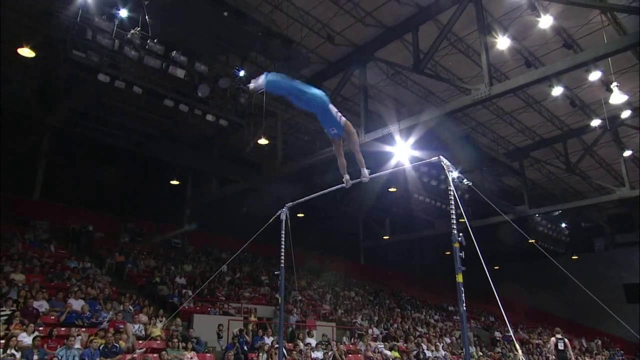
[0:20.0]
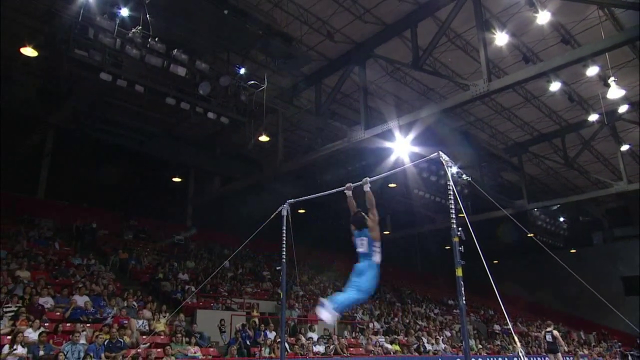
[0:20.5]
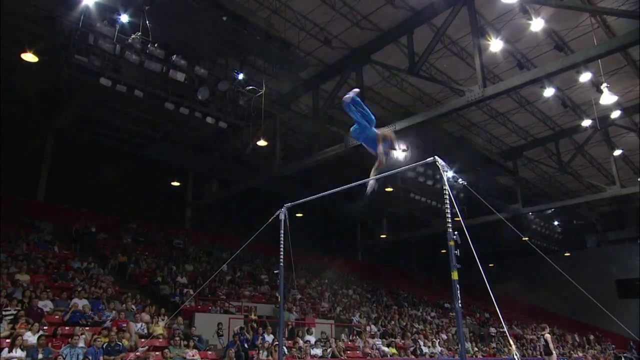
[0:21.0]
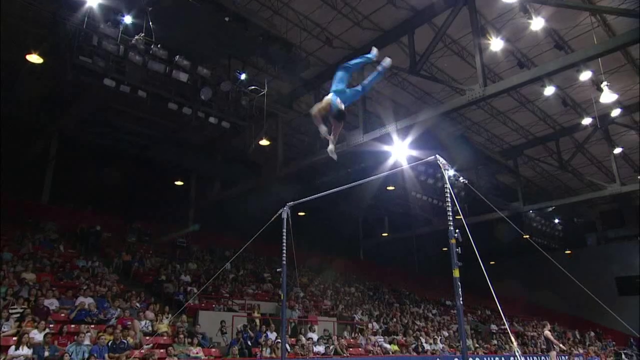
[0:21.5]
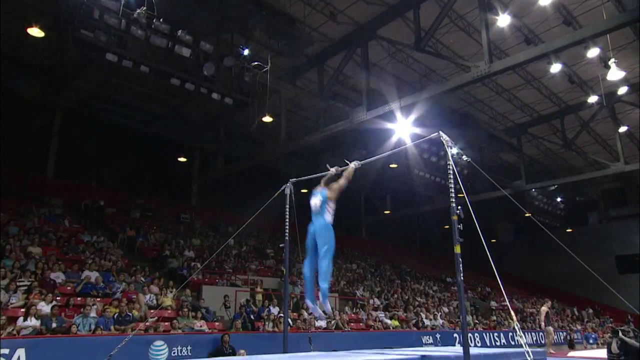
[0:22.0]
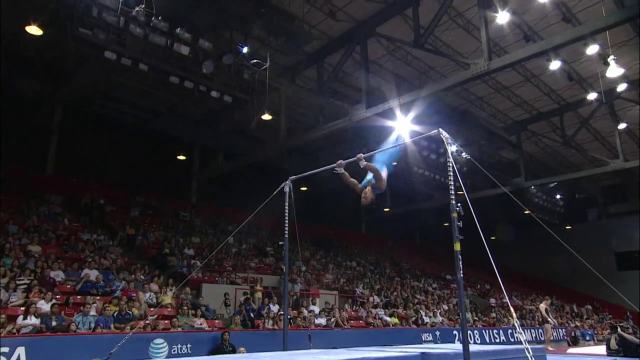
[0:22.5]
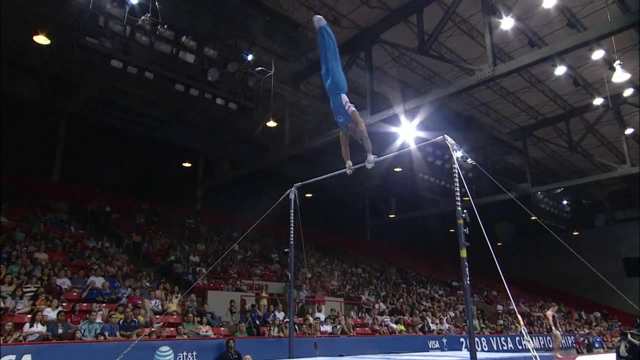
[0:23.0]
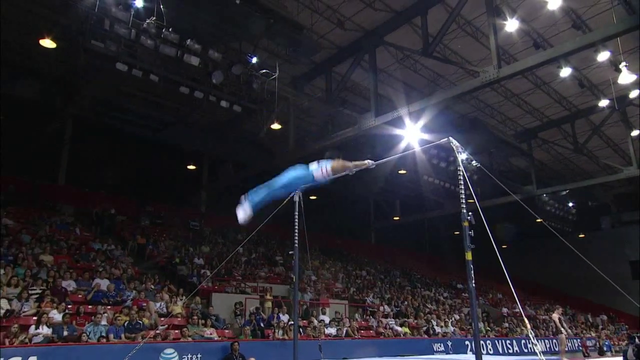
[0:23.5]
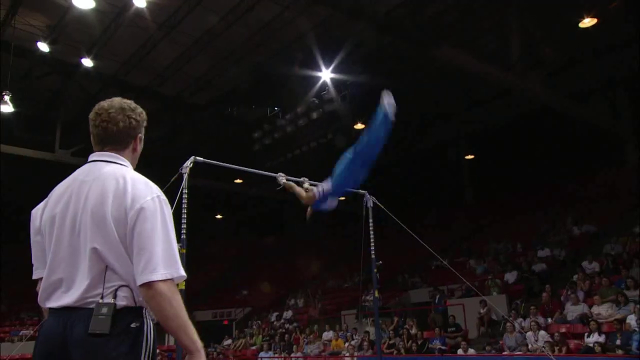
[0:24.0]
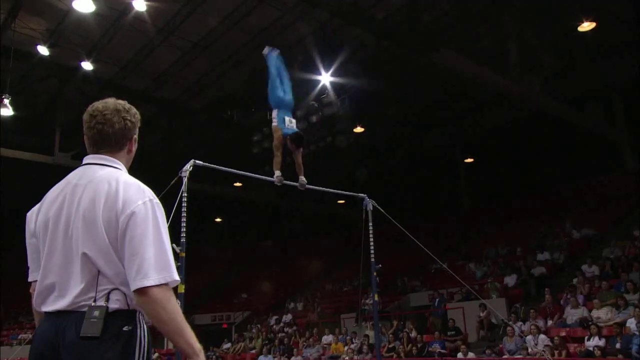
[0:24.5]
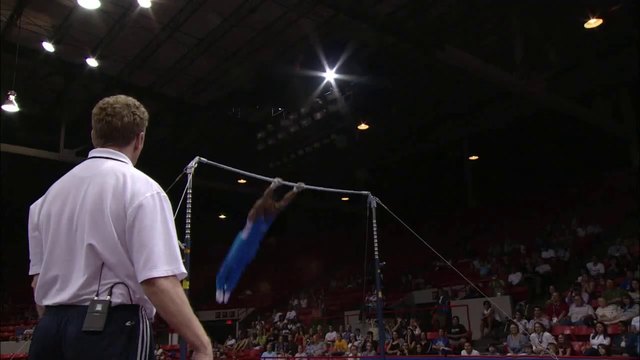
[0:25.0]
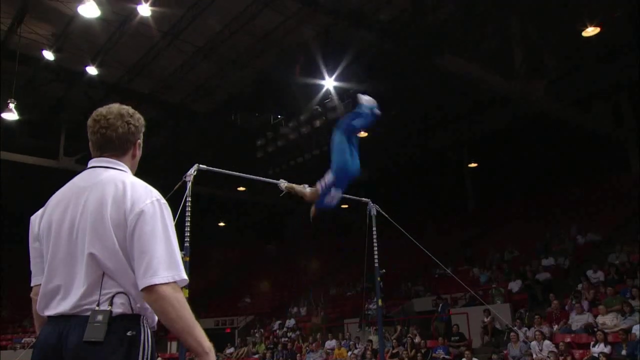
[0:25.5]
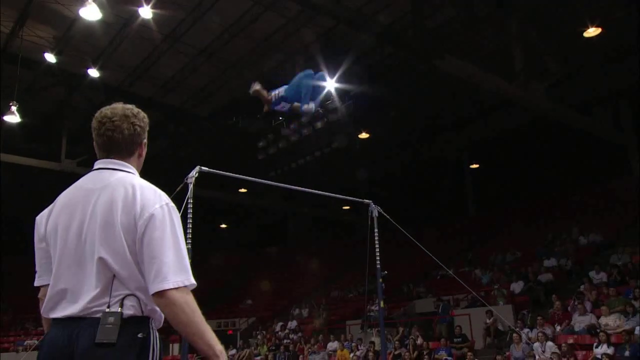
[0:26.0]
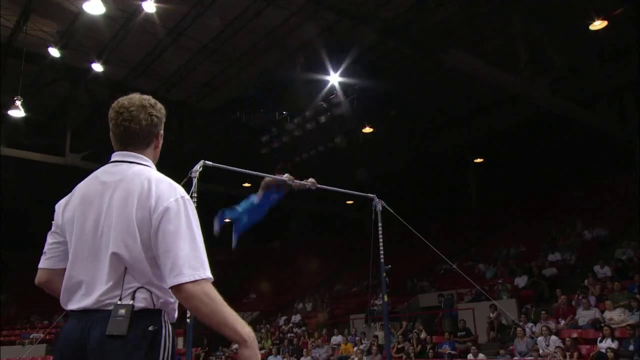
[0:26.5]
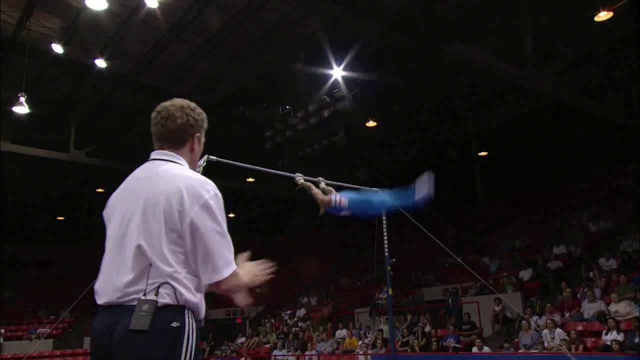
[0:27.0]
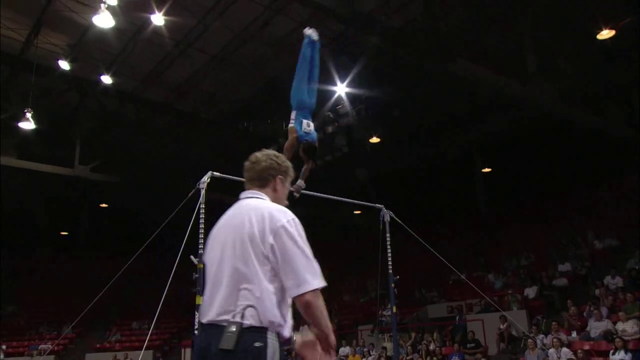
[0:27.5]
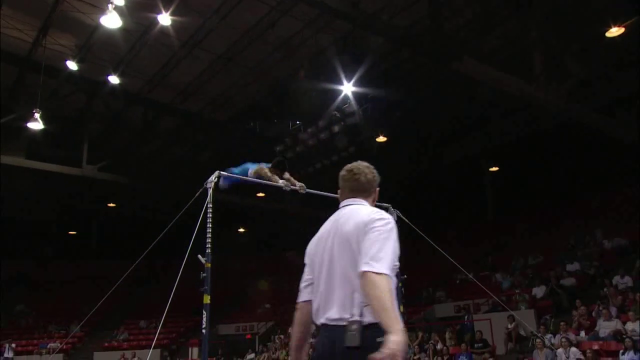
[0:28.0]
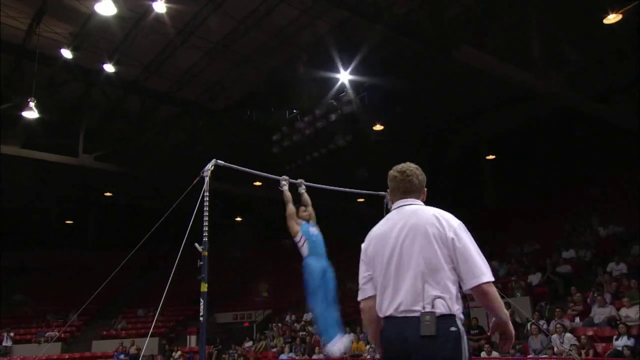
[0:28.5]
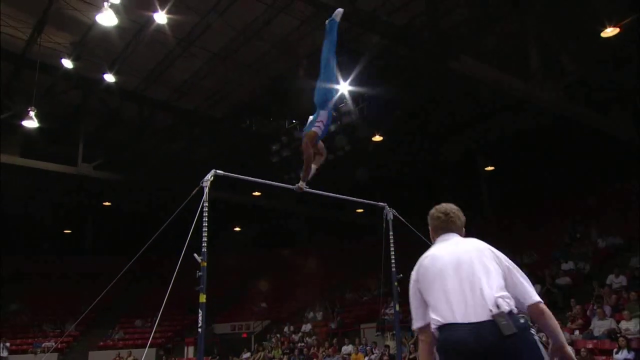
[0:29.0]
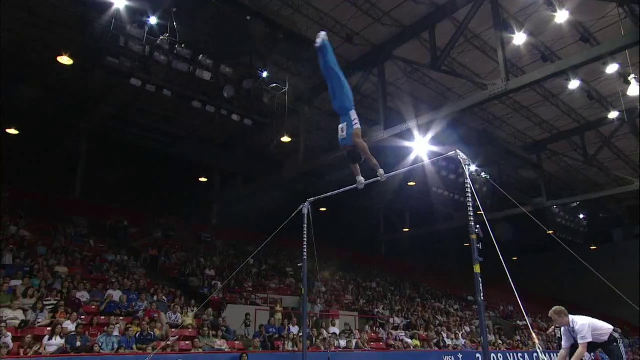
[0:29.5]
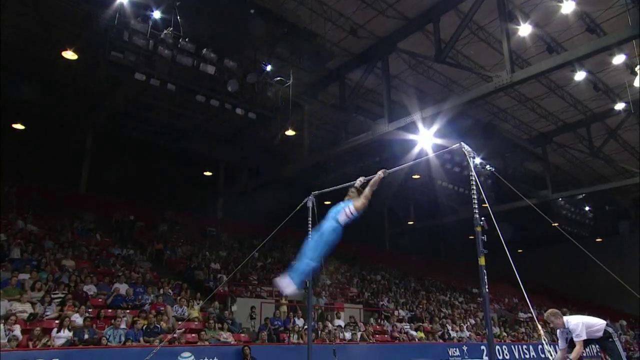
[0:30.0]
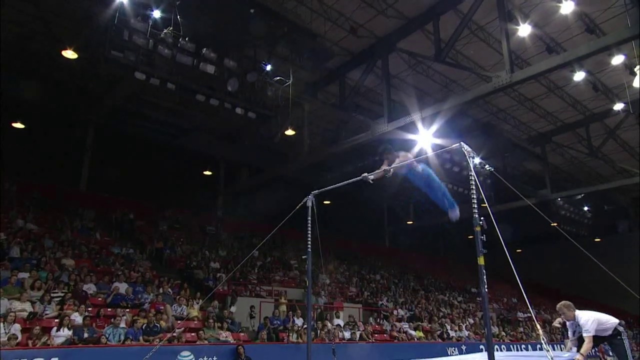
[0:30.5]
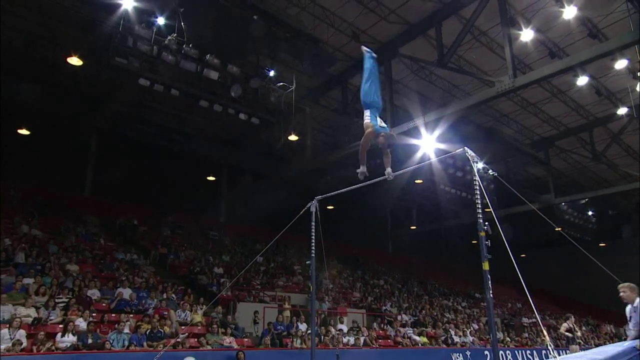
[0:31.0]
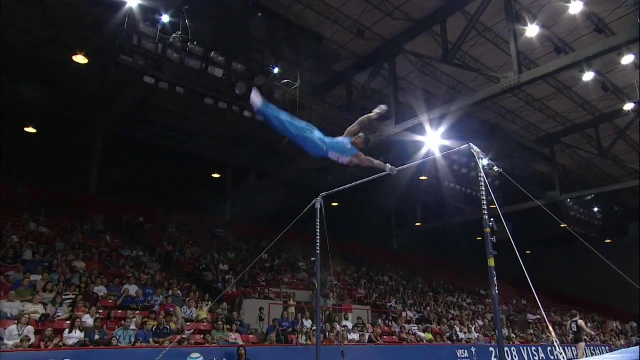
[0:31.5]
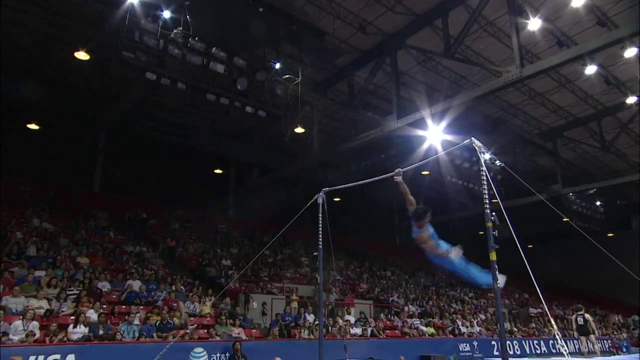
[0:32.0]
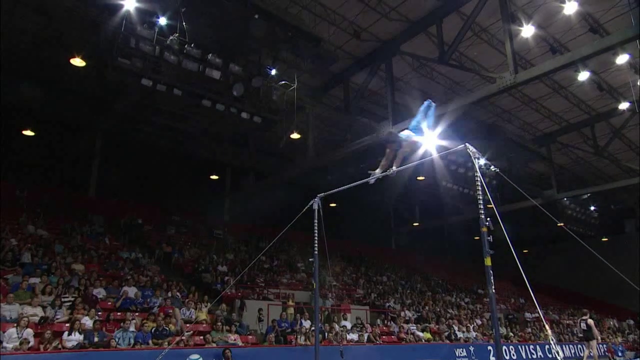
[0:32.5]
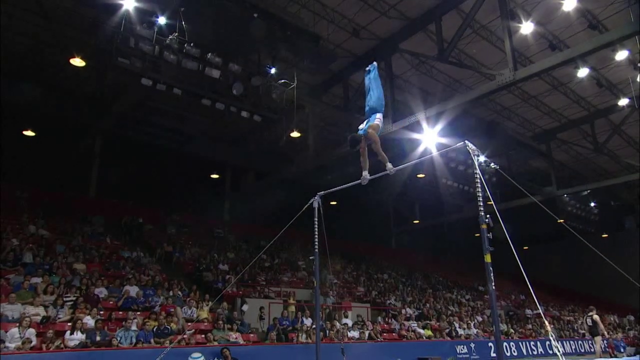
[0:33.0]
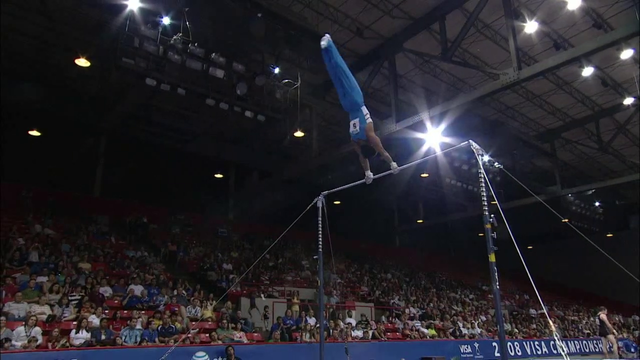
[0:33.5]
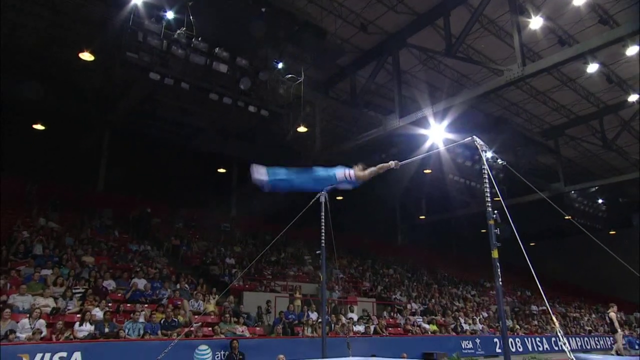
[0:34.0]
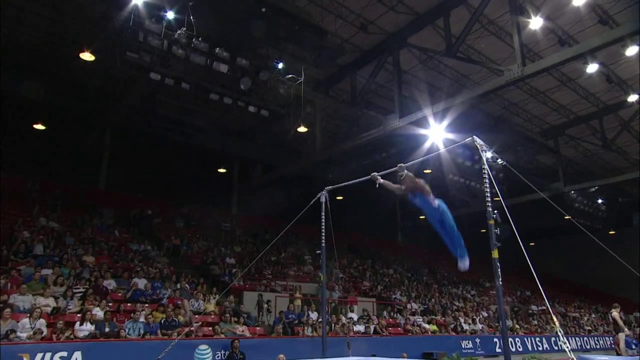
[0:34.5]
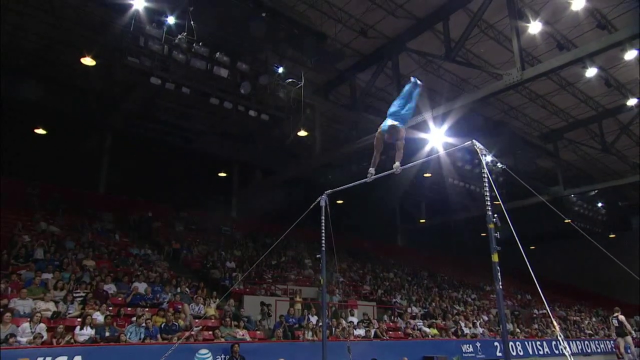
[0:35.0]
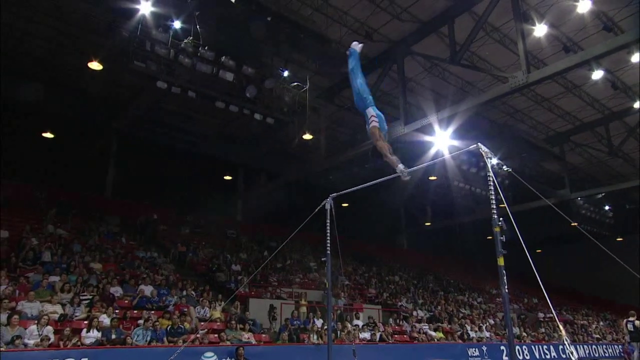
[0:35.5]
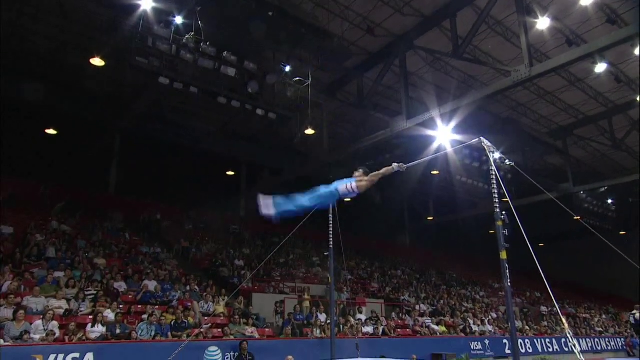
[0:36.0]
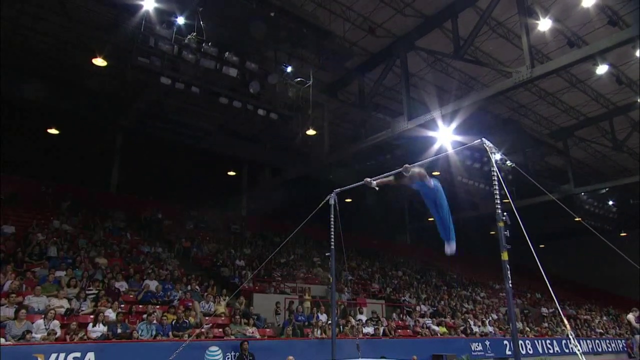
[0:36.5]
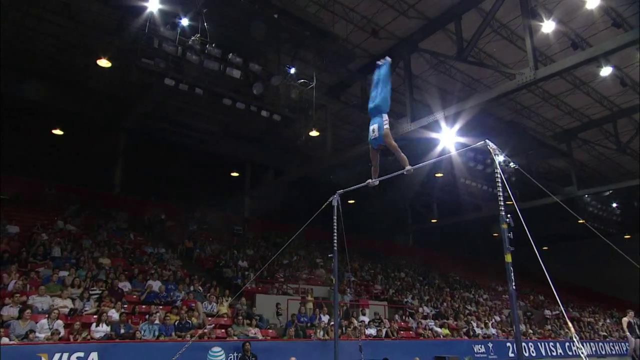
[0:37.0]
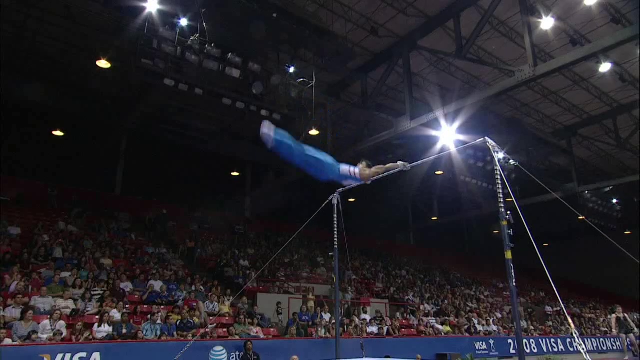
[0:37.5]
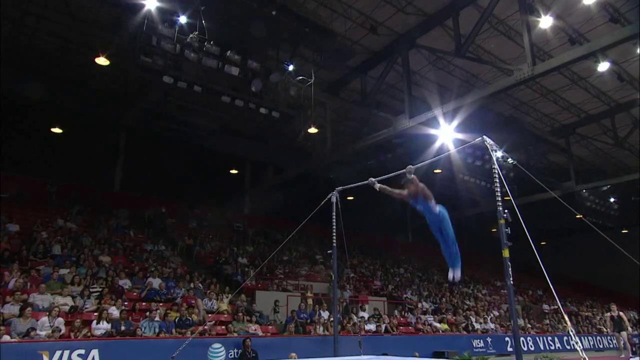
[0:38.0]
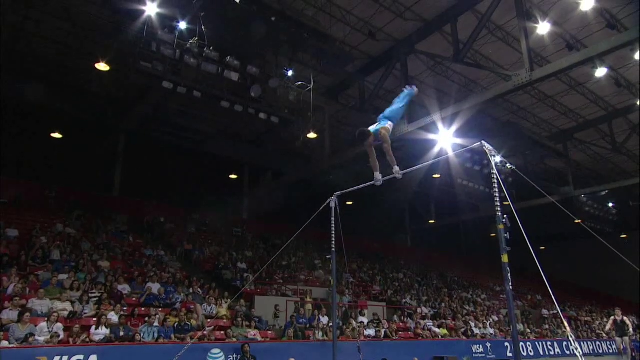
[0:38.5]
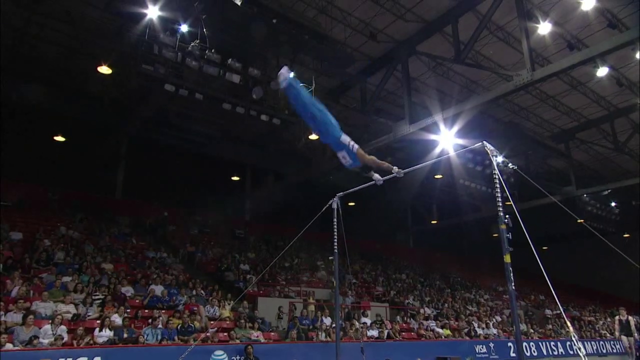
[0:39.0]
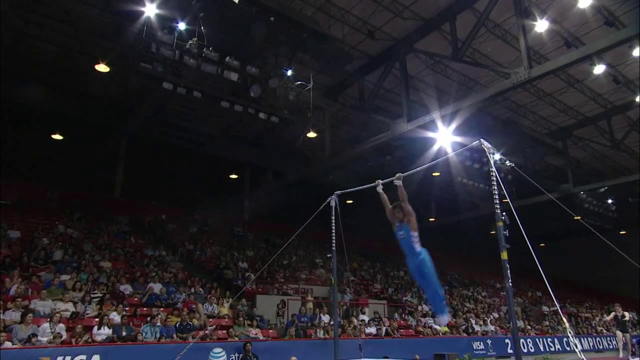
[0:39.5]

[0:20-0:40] During a gymnastics performance, a man in a fitted, tight tank top and blue pants spins around the uneven bars. He gains momentum, does flips in the air, then reaches back to grab the bar and continues to gain momentum. He swings around on just one arm, then twists his body in the air and changes places with his arms so that he goes spinning backwards and around. There is padding on the ground below him. There are lights up above, and one of the lights in the background looks like a six-pointed star above him as he spins, shining brightly.